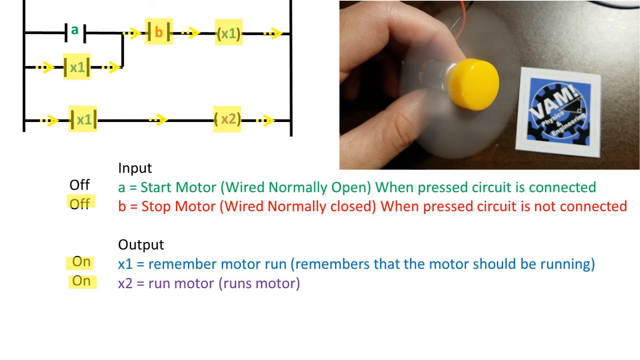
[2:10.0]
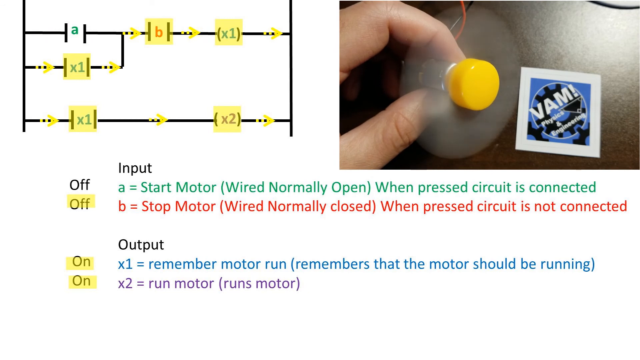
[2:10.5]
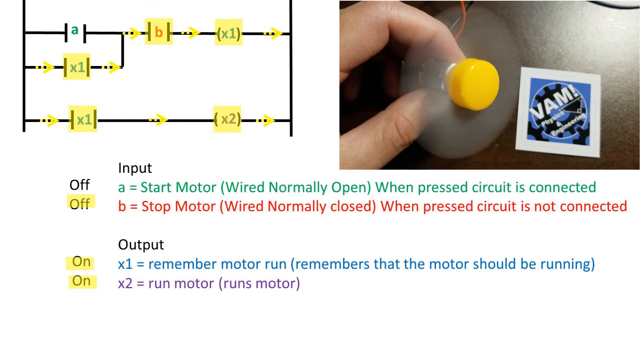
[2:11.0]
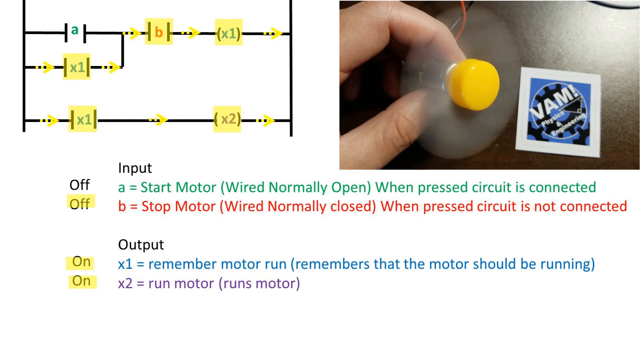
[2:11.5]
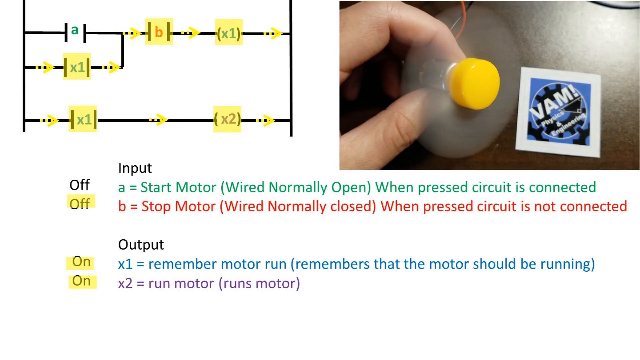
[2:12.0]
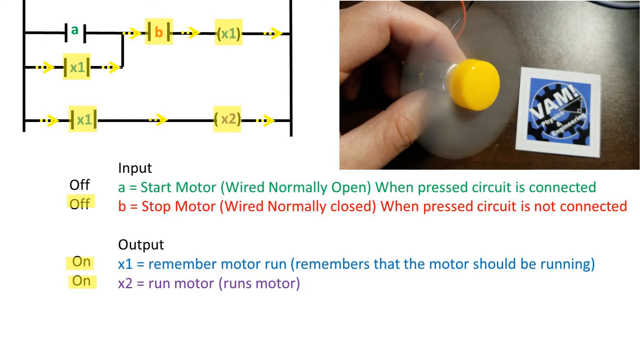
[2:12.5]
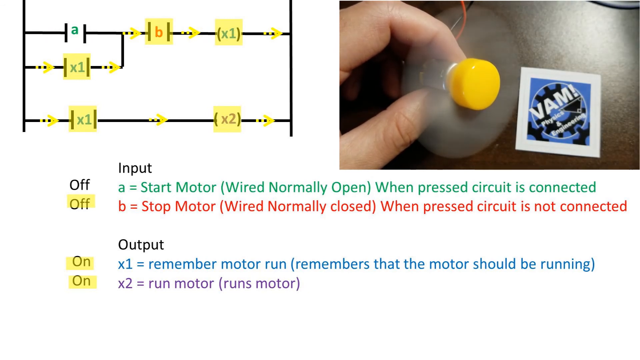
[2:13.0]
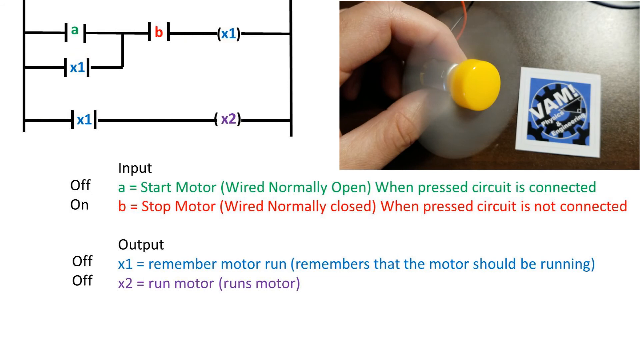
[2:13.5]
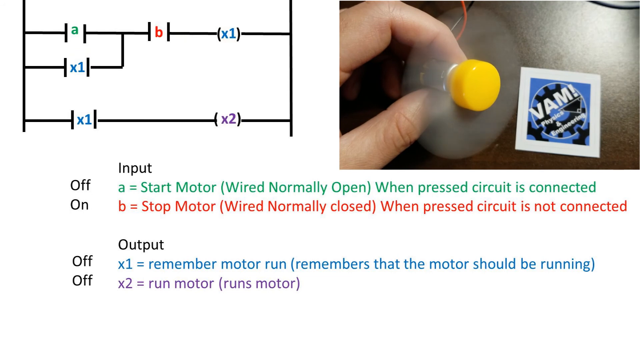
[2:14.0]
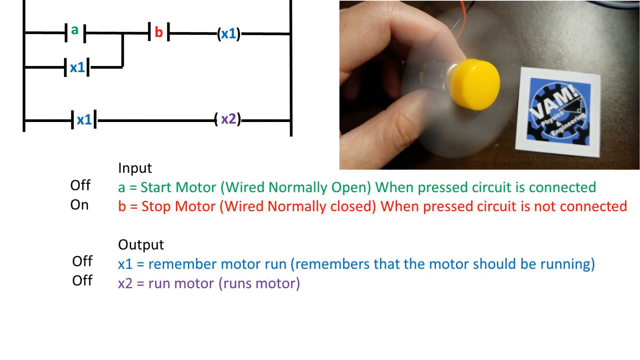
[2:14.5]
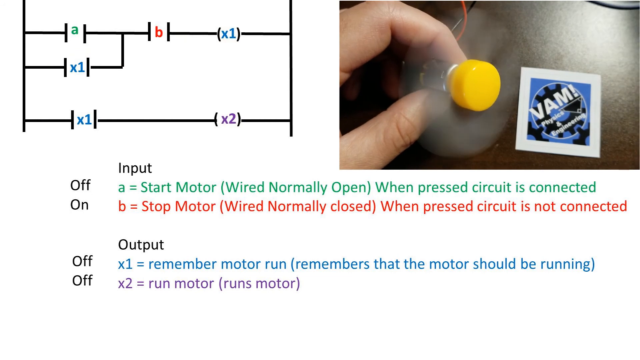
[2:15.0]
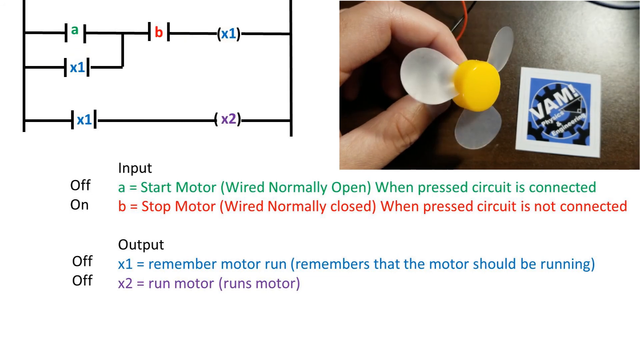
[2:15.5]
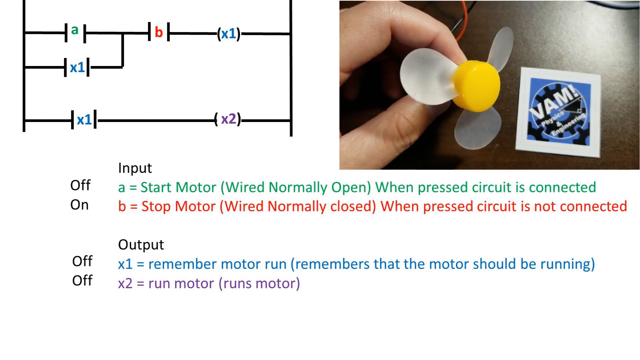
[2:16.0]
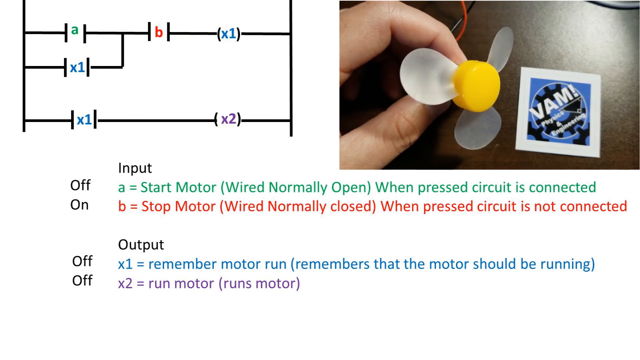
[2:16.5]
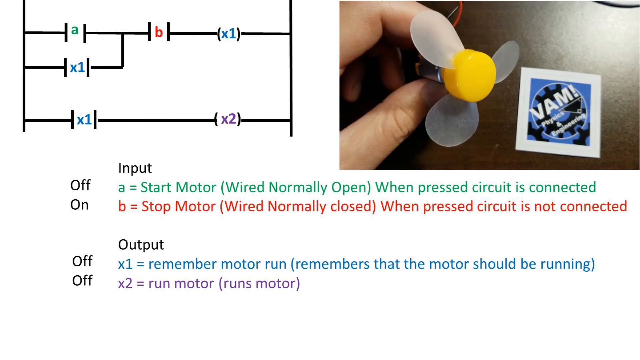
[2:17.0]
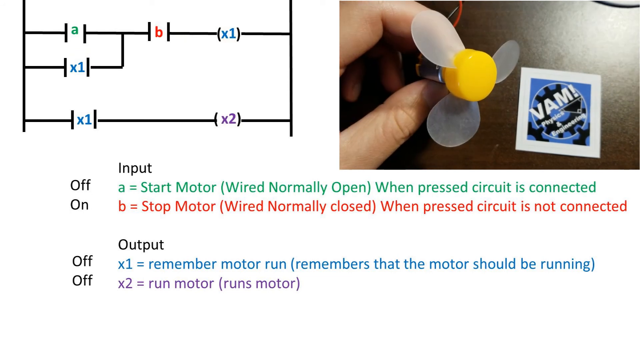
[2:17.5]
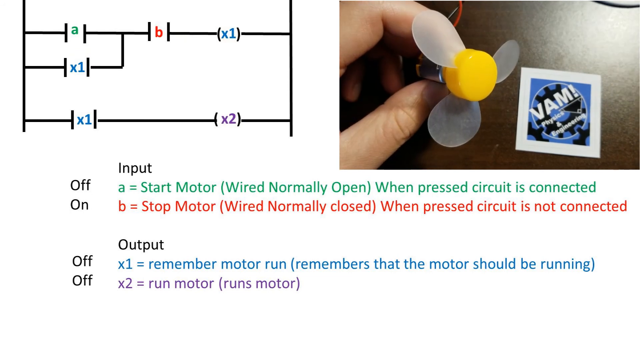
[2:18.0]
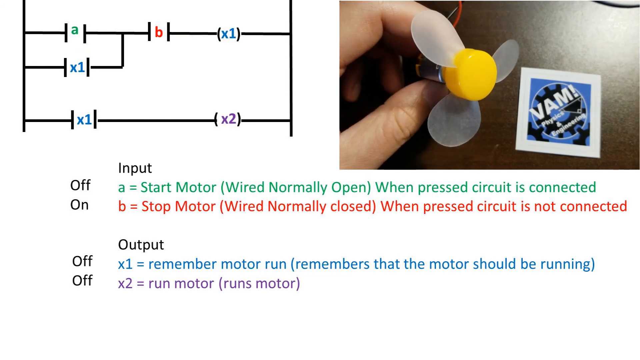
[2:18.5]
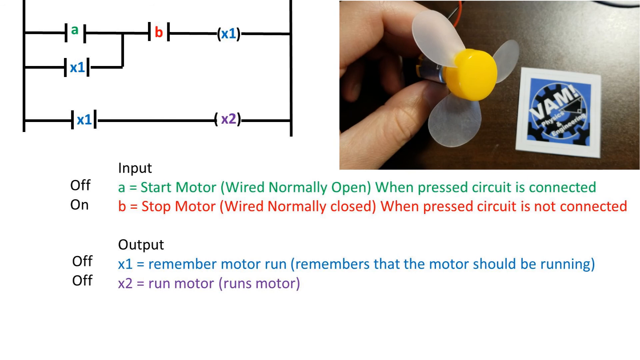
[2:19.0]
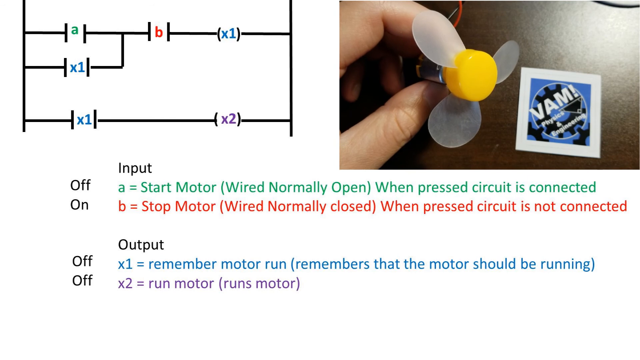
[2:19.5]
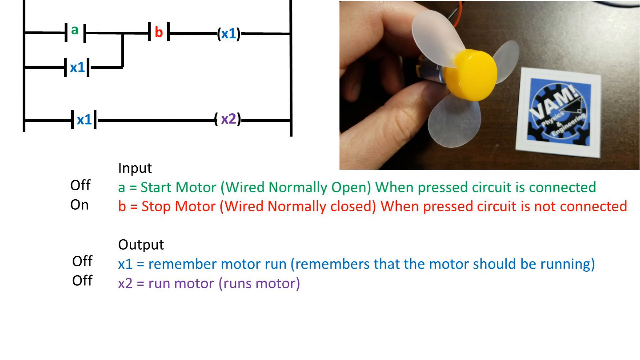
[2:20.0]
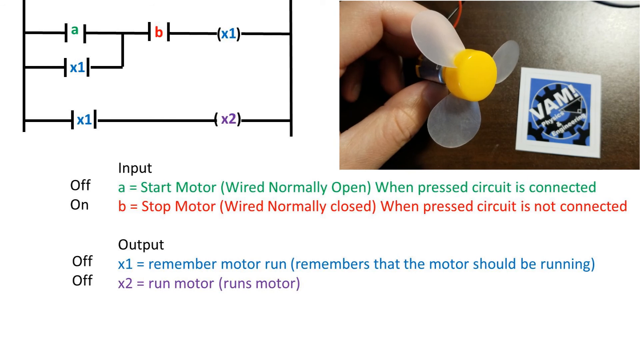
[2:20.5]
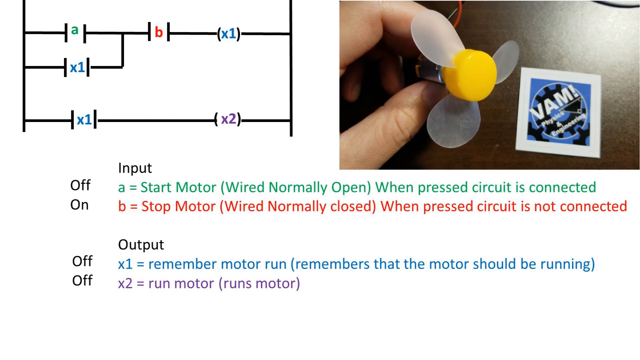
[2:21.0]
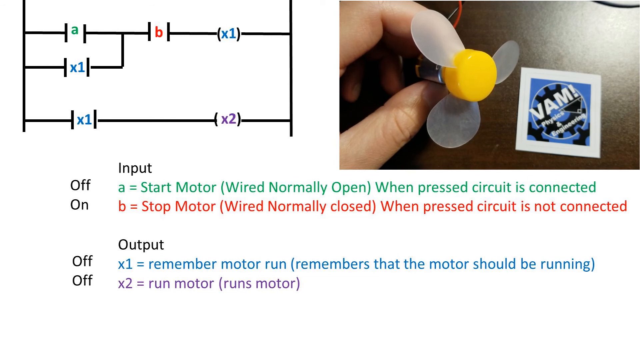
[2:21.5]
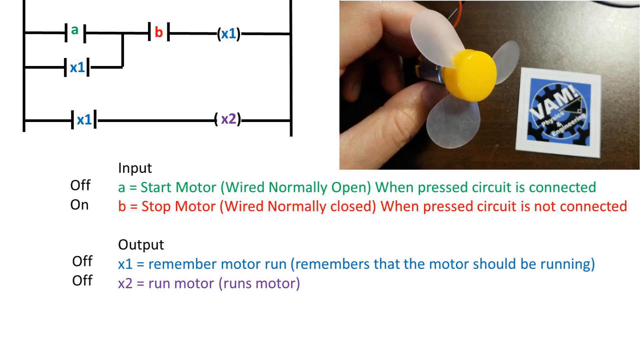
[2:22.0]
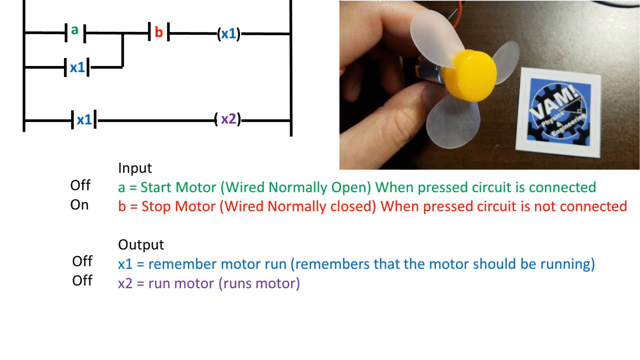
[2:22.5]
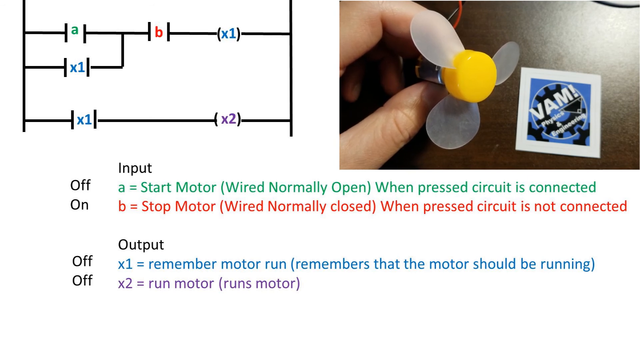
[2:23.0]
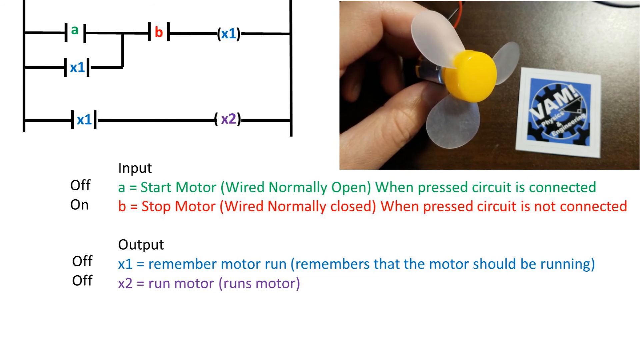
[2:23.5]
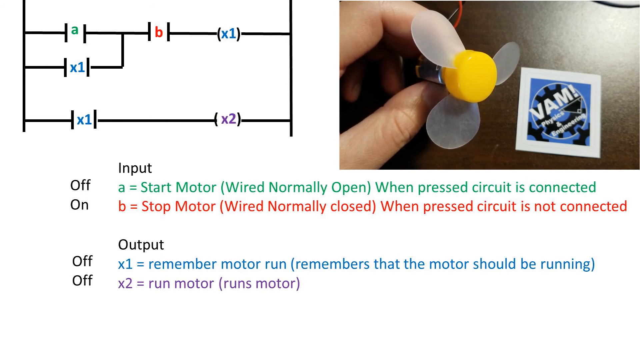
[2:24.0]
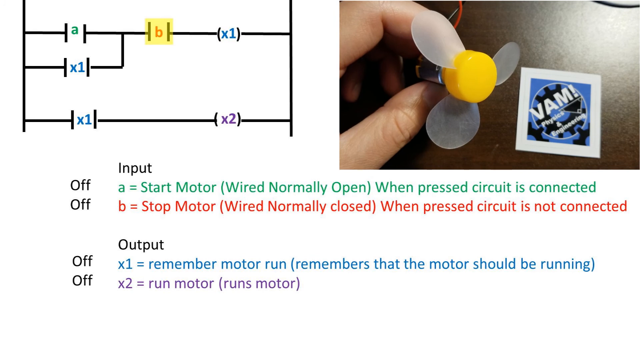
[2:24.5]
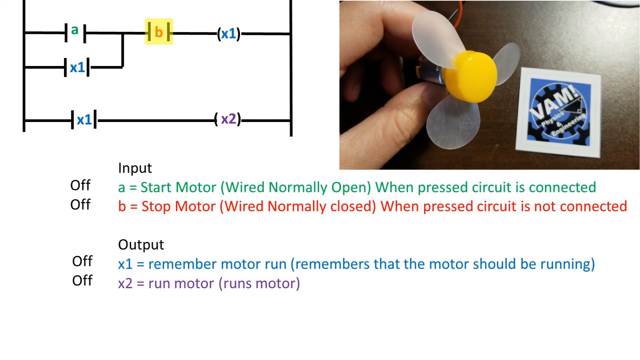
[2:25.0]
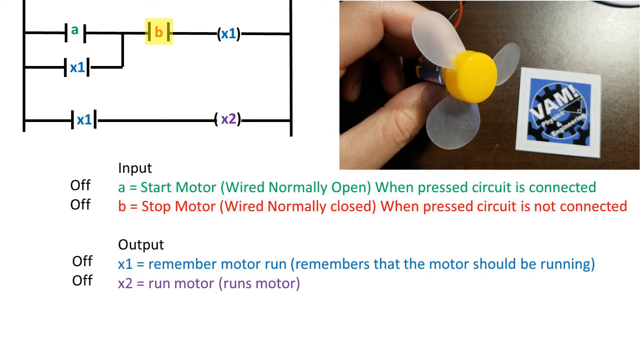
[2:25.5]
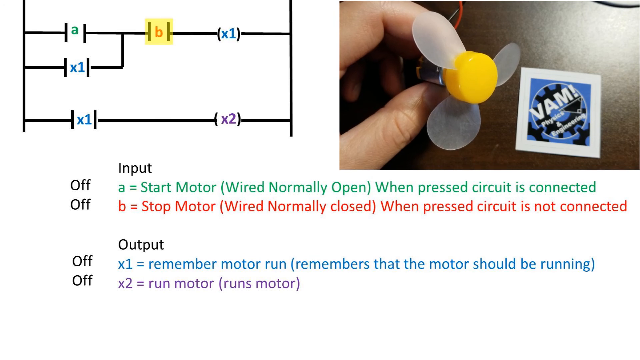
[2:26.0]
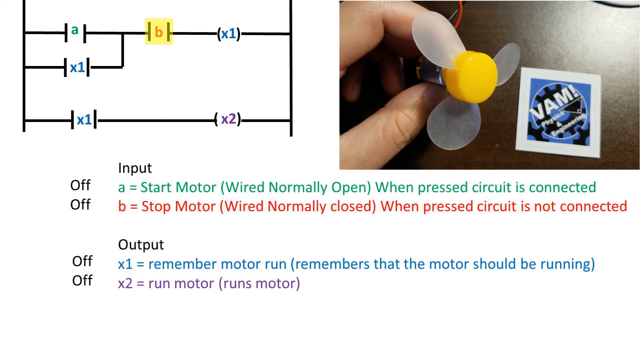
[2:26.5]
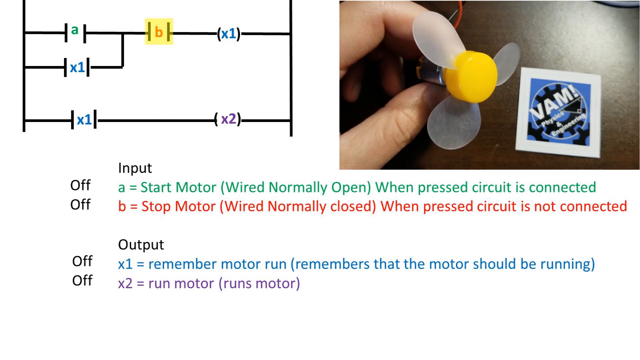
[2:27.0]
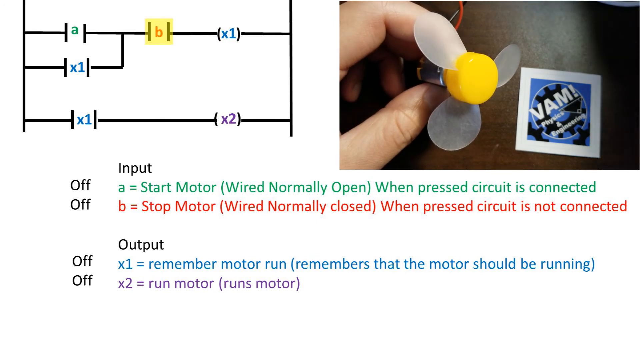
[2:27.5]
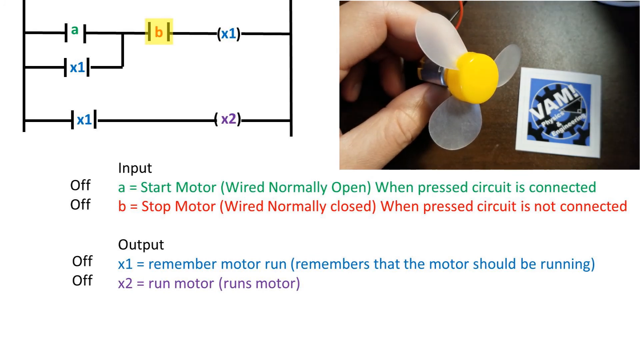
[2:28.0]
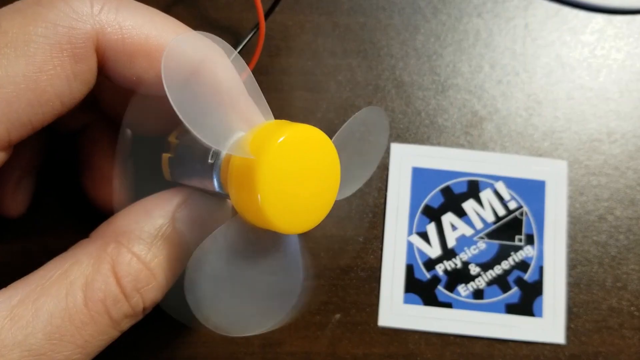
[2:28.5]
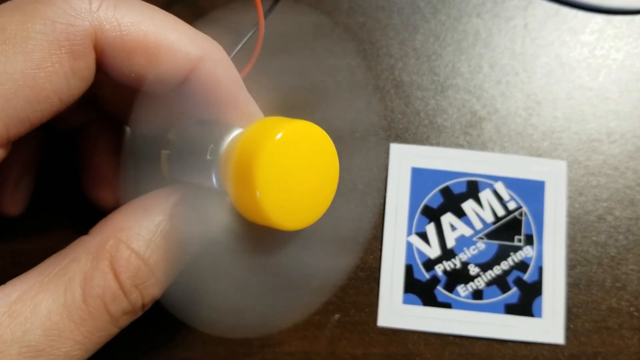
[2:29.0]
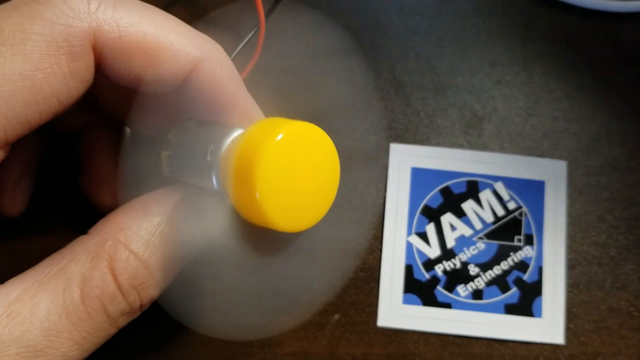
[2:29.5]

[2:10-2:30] A list of instructions for the experiment is shown. Number one is "intro to Mechatronics 1, ladder logic to logic gates", with the intro below it. On the other side is a blue table containing three tables, reading "true equals I". Next comes a page with A, B and "times 2": input A, input B, and output "times 2". Then a hand appears, with fingers holding the motor as it runs. Two cords, a red one and a black one, are there, apparently connected to the electricity.